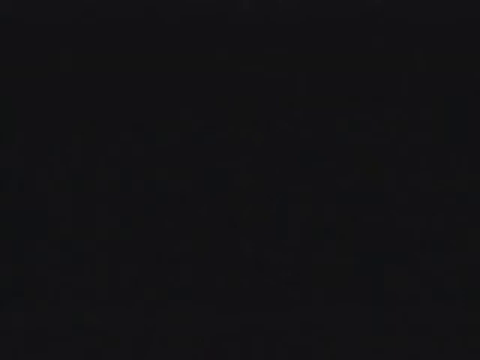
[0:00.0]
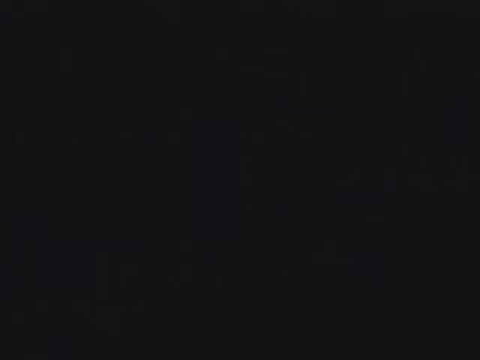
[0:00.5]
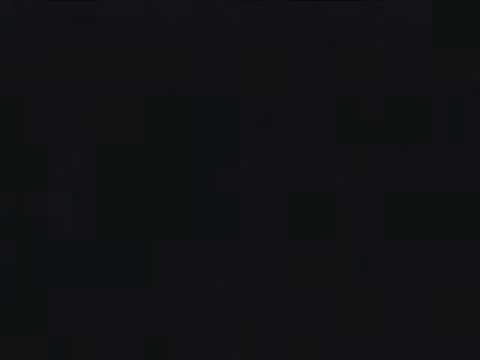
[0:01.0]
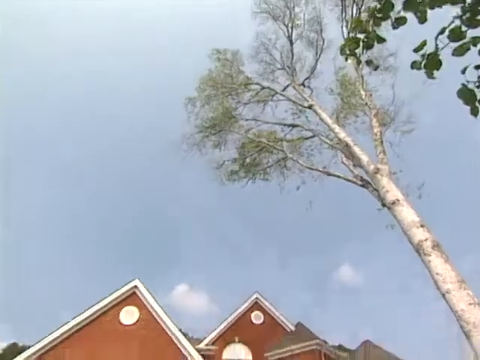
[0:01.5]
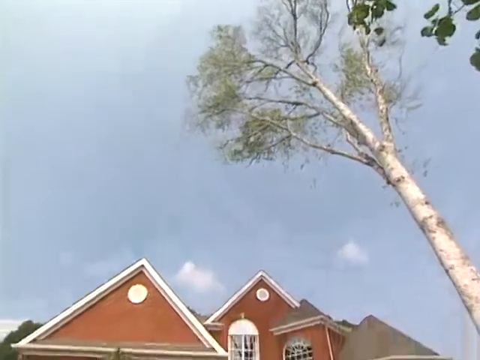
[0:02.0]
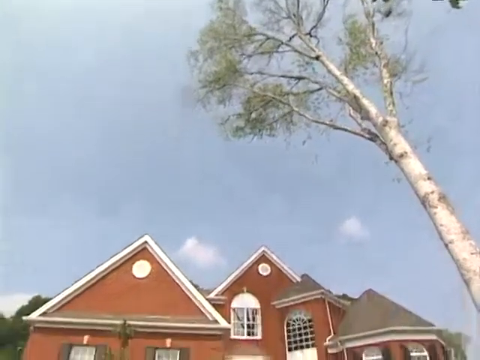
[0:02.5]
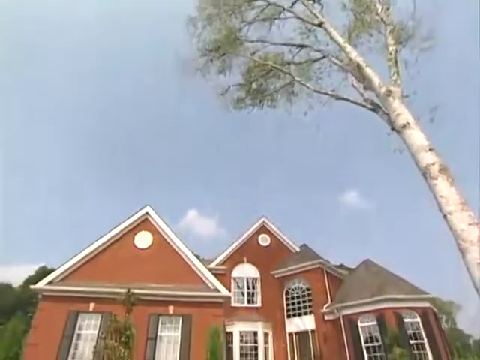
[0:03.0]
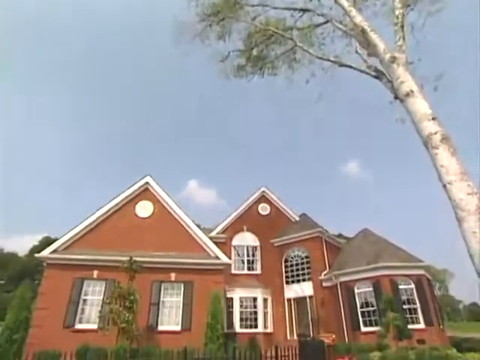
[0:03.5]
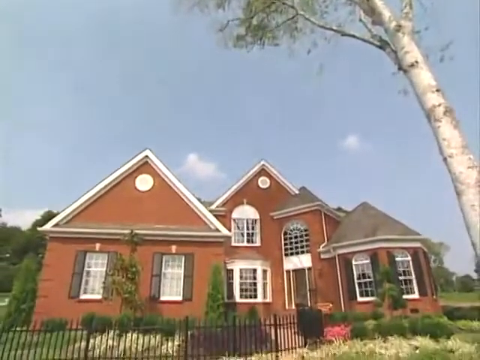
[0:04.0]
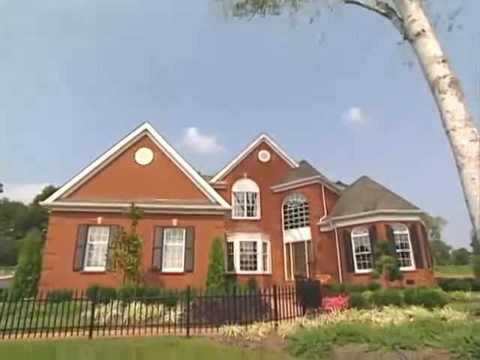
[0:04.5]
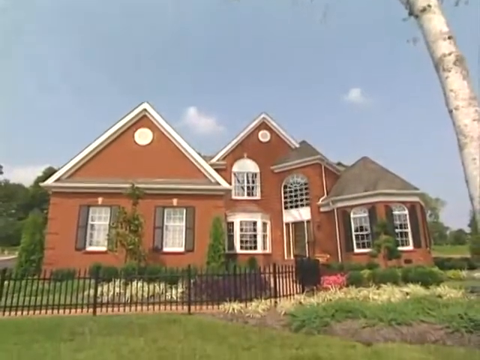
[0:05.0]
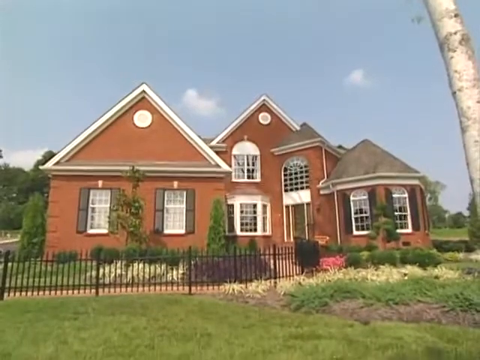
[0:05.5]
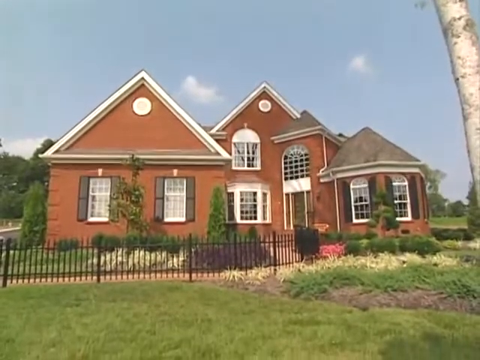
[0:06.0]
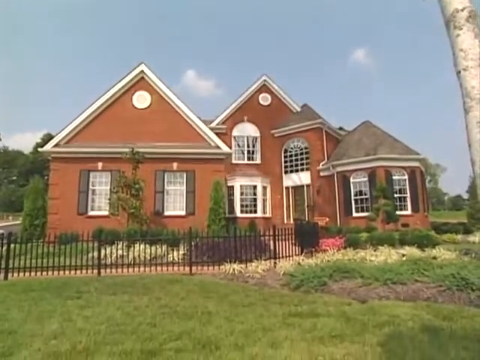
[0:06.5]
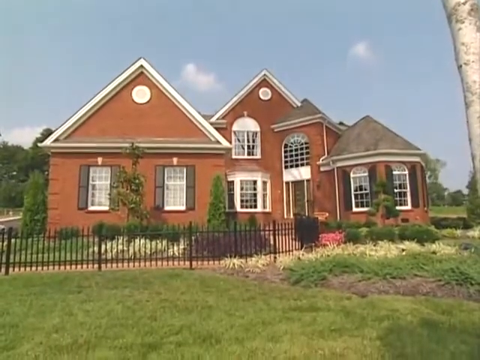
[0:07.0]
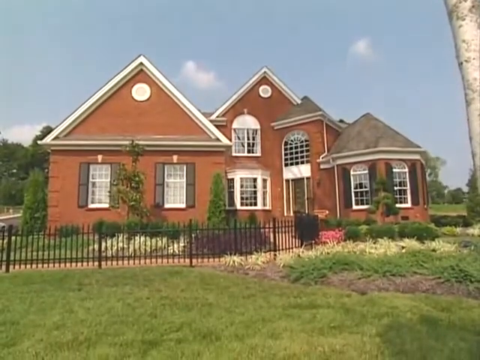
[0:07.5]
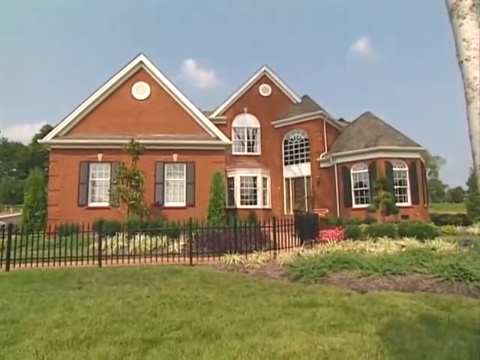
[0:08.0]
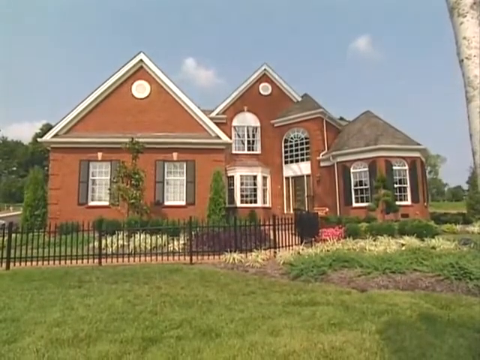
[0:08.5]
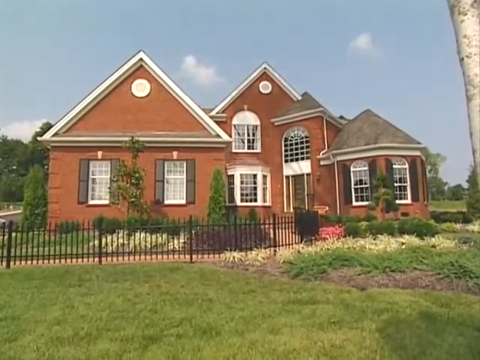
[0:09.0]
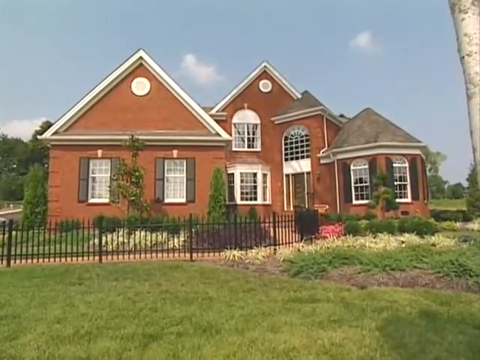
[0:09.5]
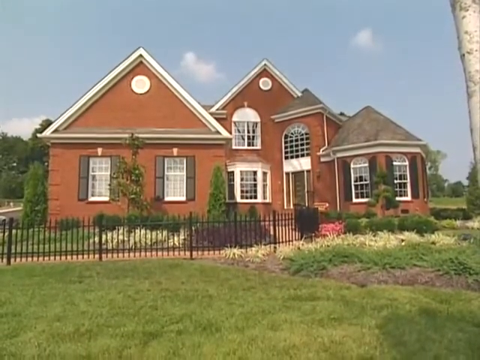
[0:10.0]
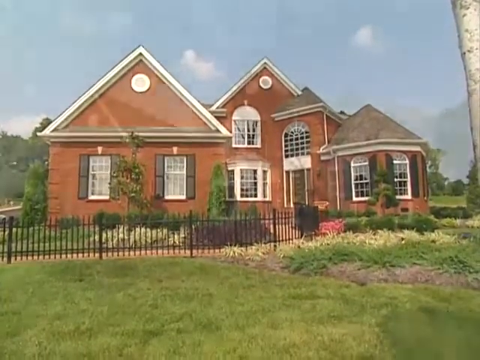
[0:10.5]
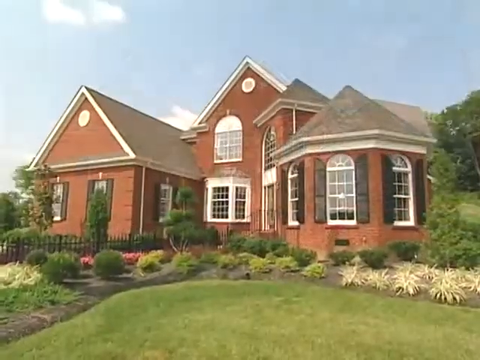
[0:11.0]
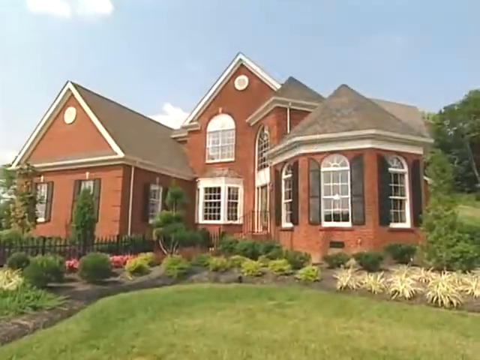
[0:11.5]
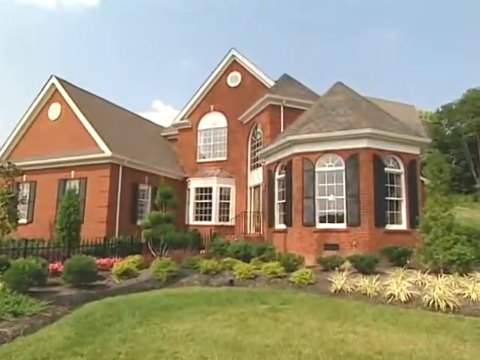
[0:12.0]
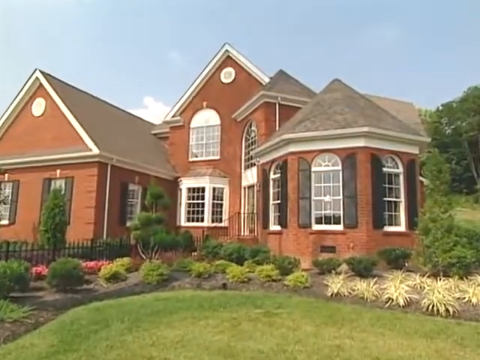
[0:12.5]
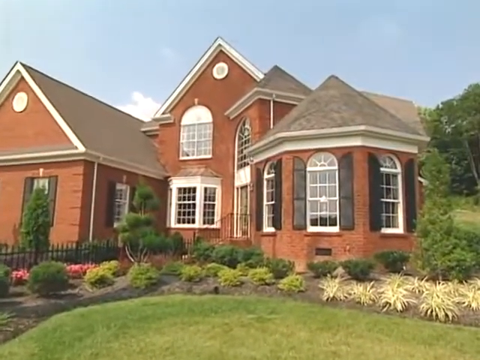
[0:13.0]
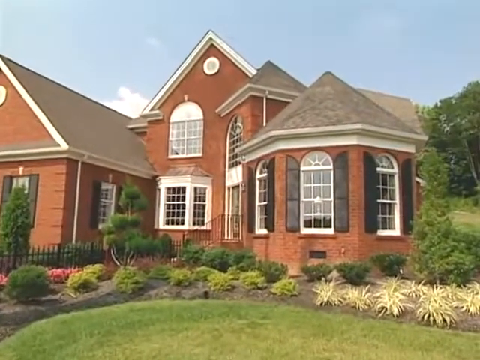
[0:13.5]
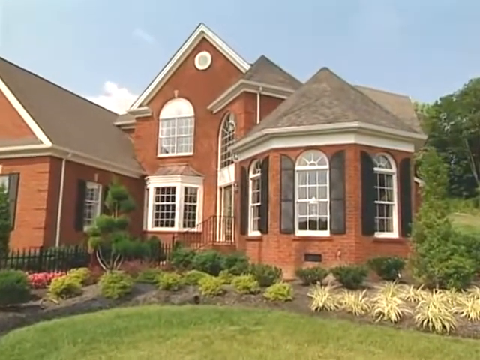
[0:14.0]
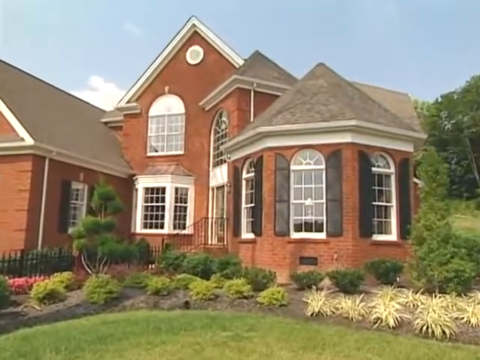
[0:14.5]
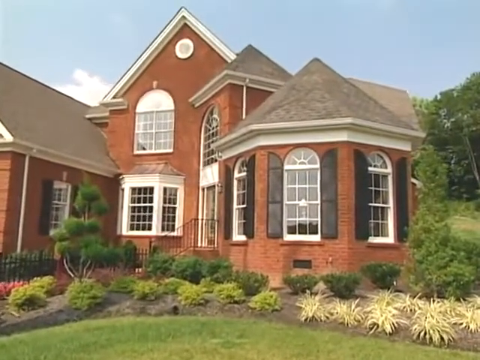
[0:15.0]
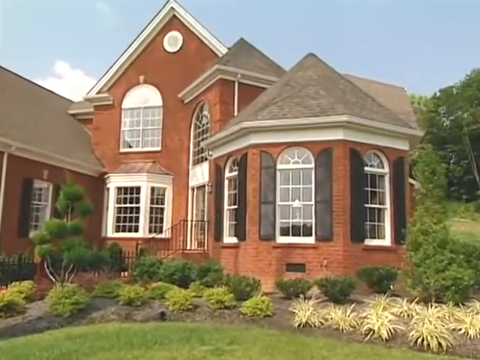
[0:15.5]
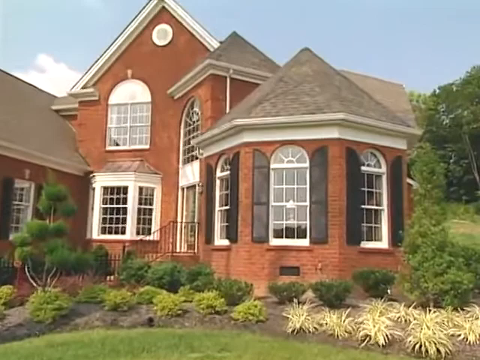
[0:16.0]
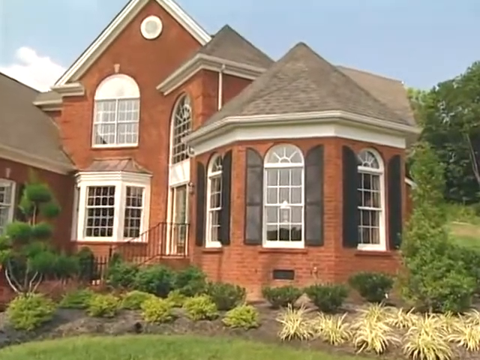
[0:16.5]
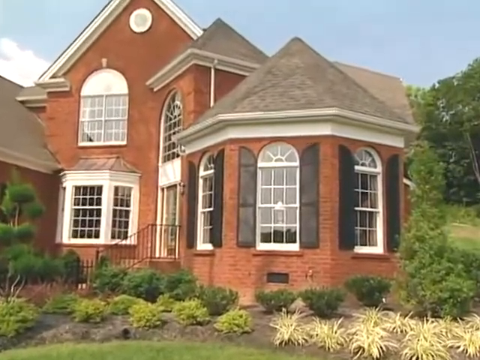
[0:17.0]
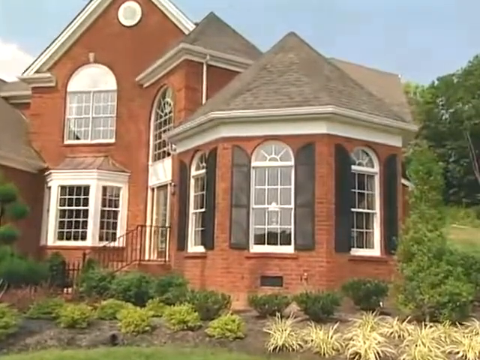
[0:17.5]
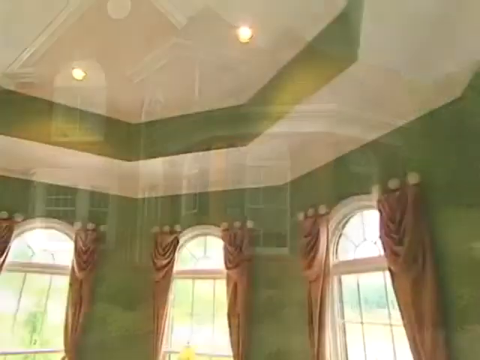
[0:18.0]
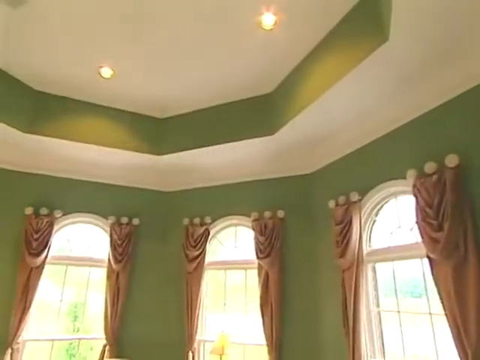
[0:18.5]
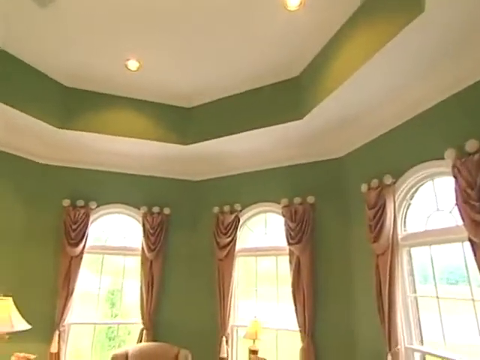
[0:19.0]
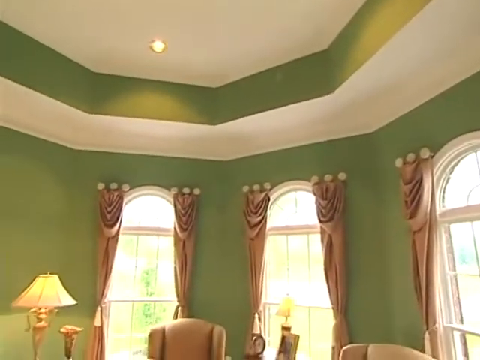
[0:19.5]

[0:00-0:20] The video opens on the sky with a tree and the top of a building in frame, then the camera pans down to show the entire building. The building is a dark orangey colour with a grey roof, and its two pointed parts have a white frame. The windows on the left-hand side of the building have shutters, and a black fence runs around the building. There are some small trees and a large tree to the right, with various plants surrounding the building. The camera angle switches to more of the right-hand side of the building for a better view from that angle, and the camera slowly zooms in towards the building; the windows on the right-hand side also have shutters. The camera then switches to the inside of the building: a room with a green wall and rose gold looking curtains on each of the arched windows. There is a green indented section in the ceiling, and inside that section is more white ceiling with some spotlights. The camera starts to rotate to the left.